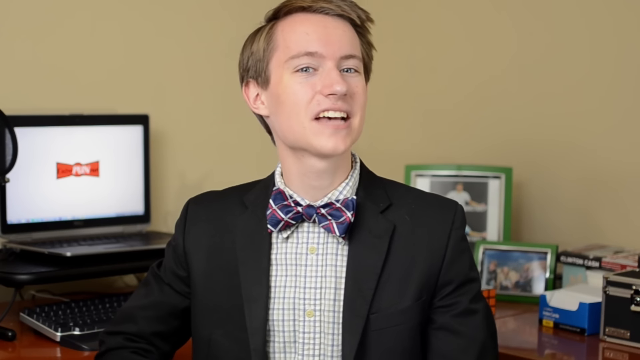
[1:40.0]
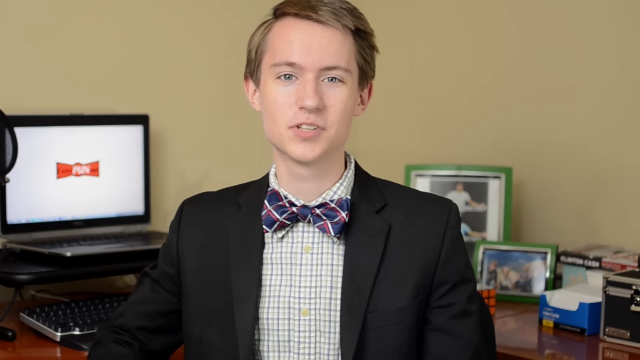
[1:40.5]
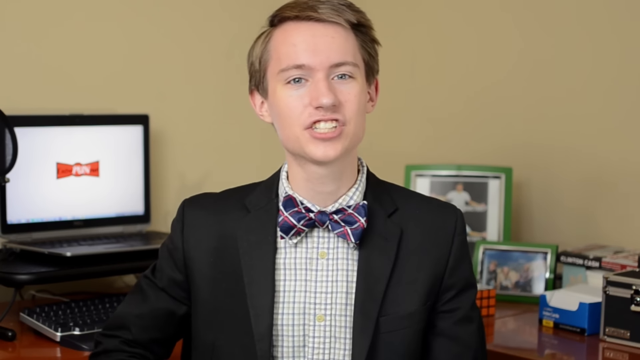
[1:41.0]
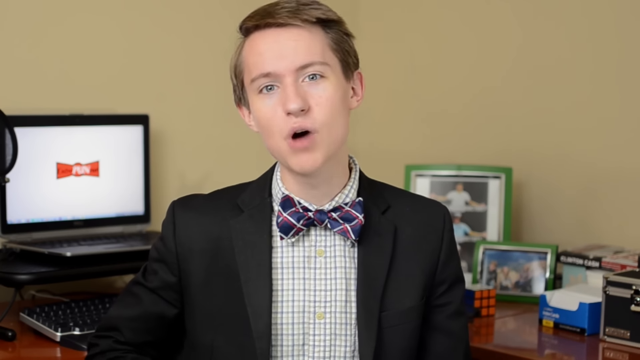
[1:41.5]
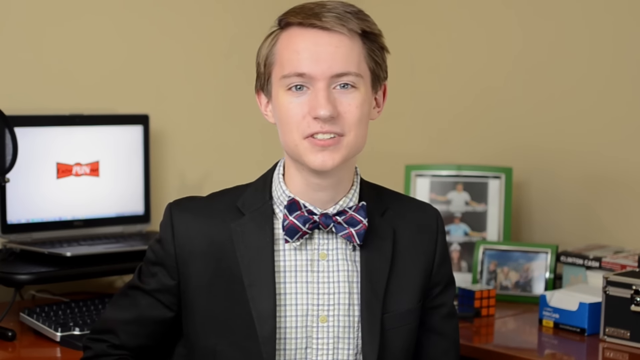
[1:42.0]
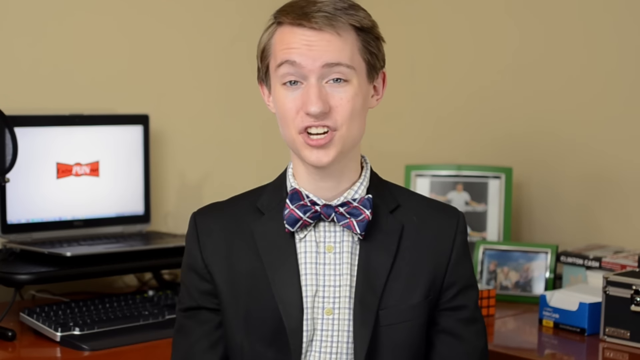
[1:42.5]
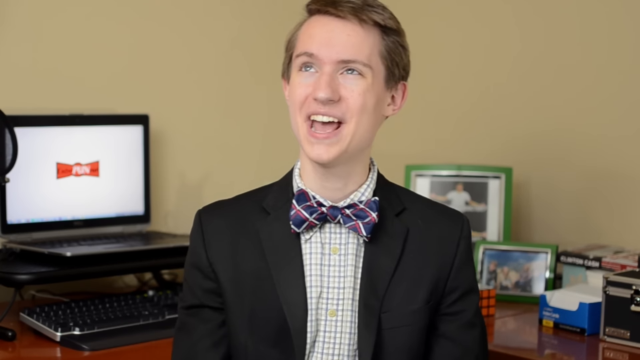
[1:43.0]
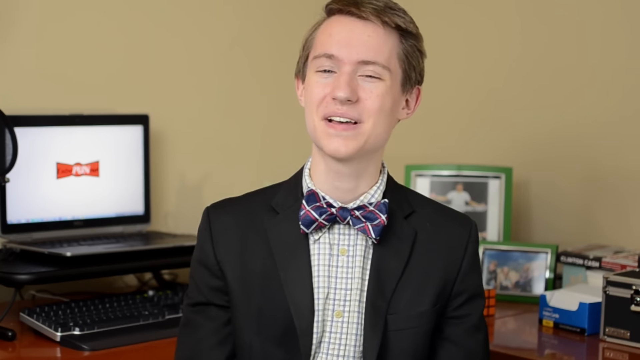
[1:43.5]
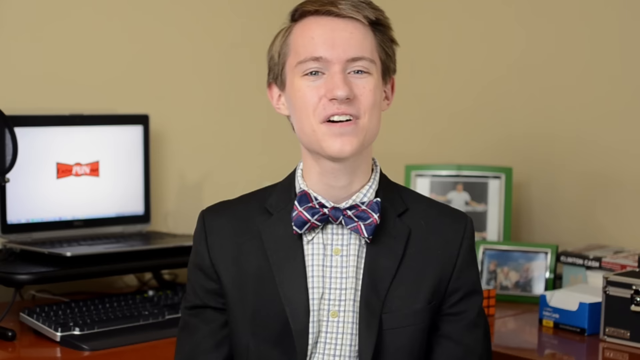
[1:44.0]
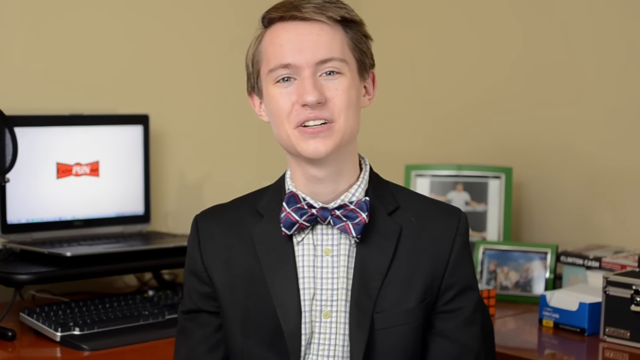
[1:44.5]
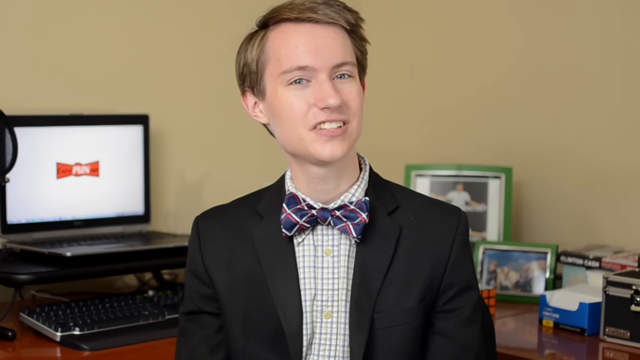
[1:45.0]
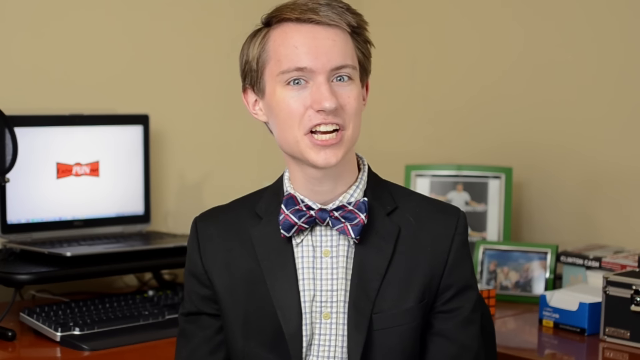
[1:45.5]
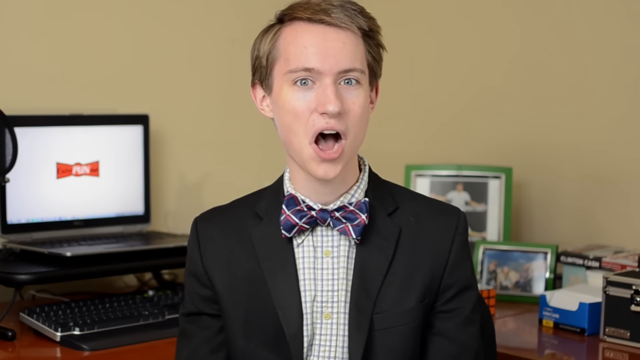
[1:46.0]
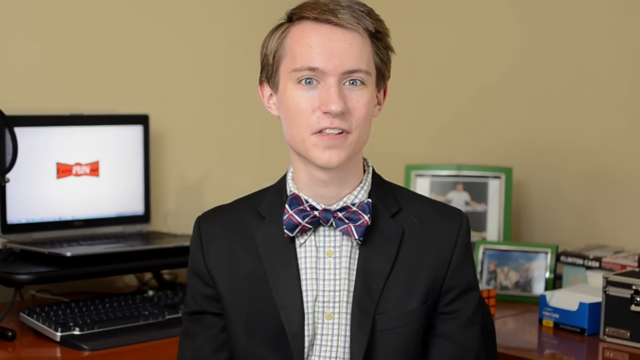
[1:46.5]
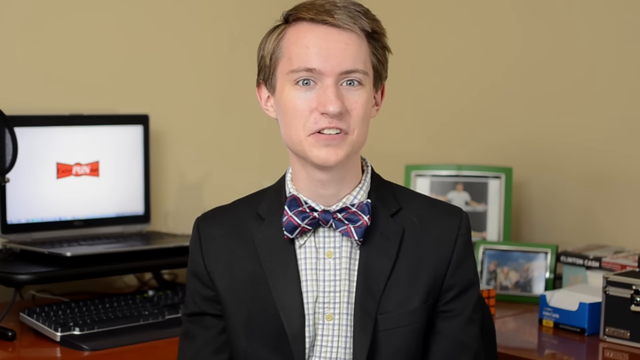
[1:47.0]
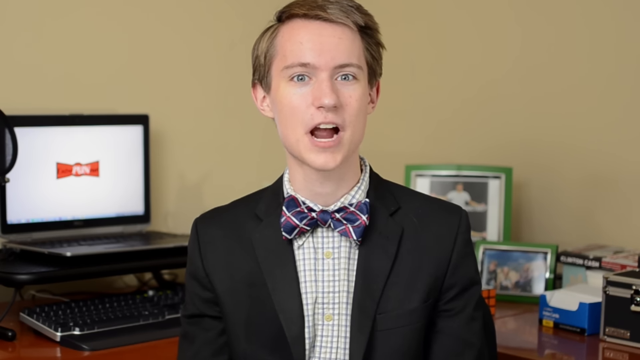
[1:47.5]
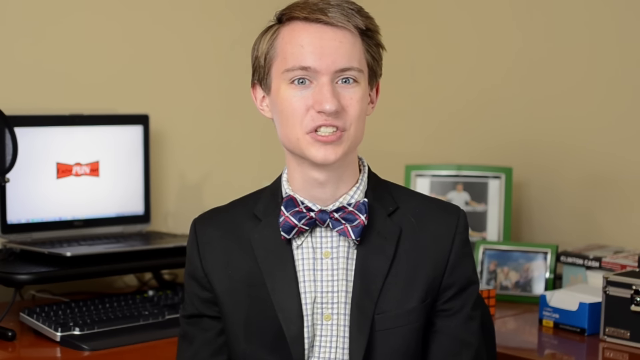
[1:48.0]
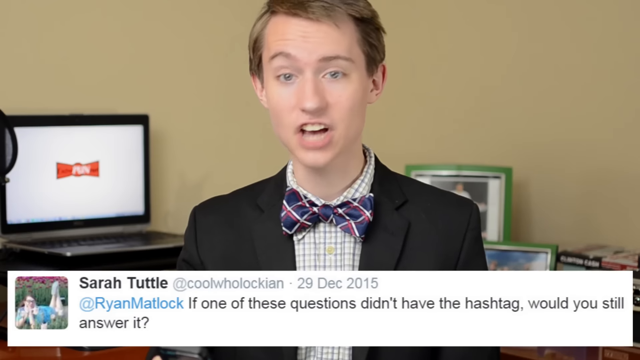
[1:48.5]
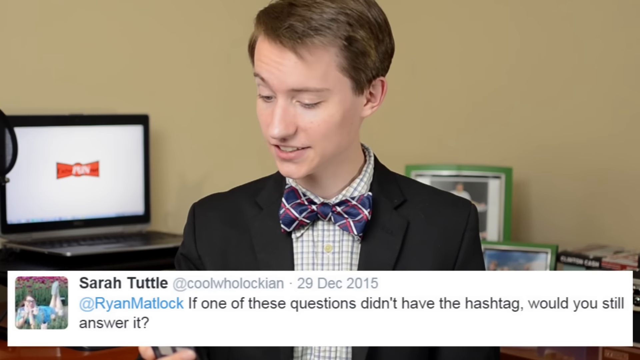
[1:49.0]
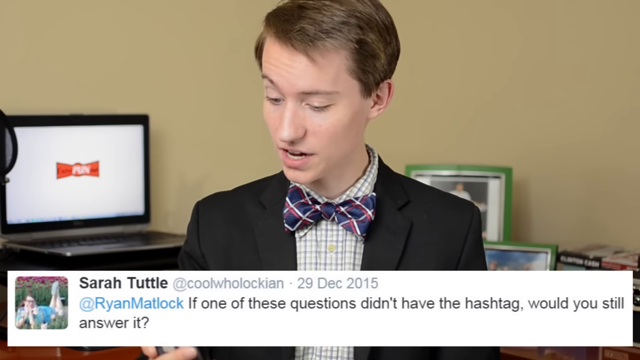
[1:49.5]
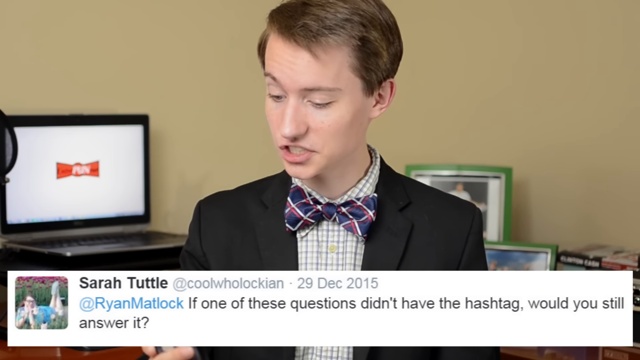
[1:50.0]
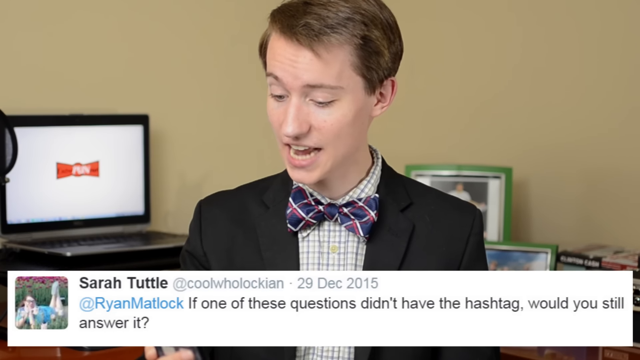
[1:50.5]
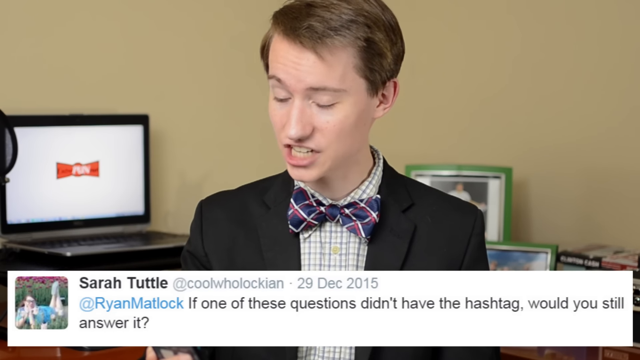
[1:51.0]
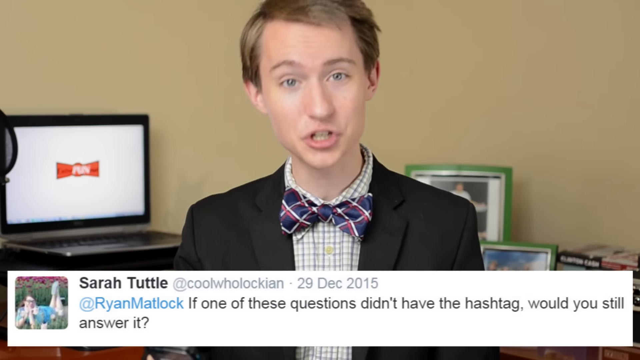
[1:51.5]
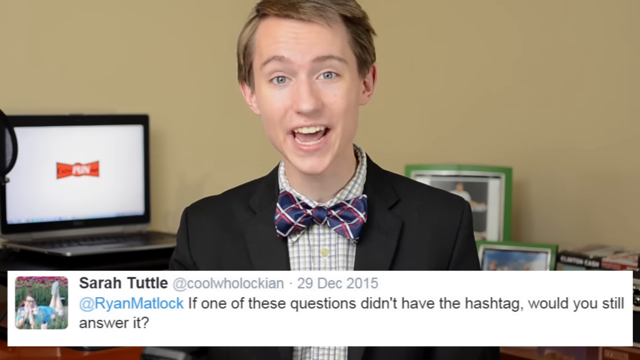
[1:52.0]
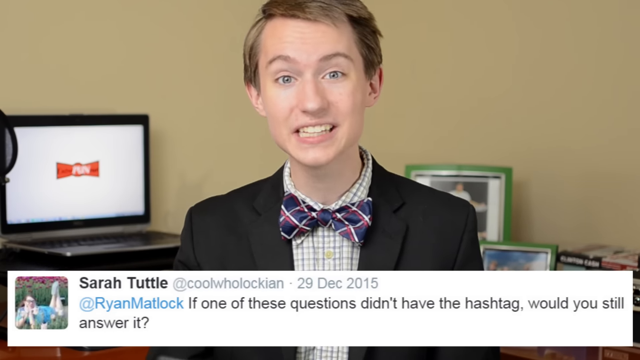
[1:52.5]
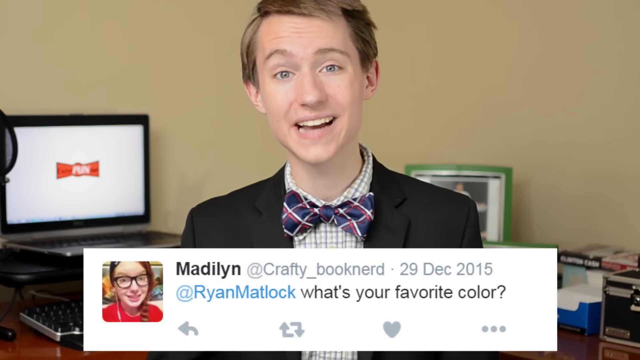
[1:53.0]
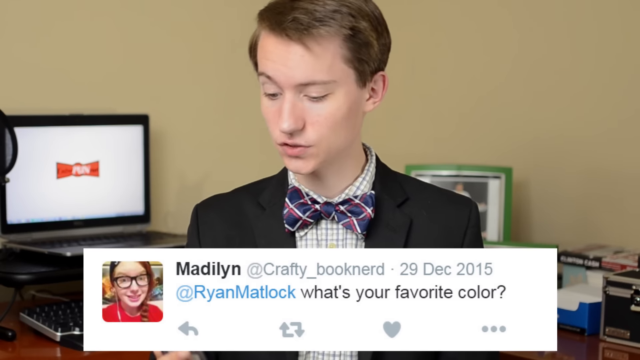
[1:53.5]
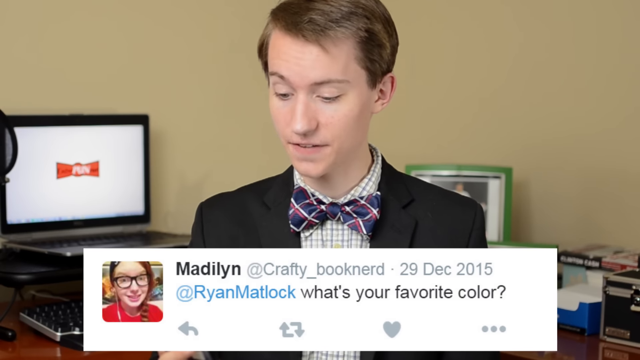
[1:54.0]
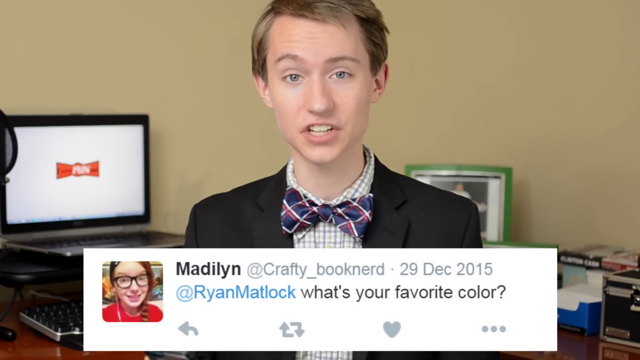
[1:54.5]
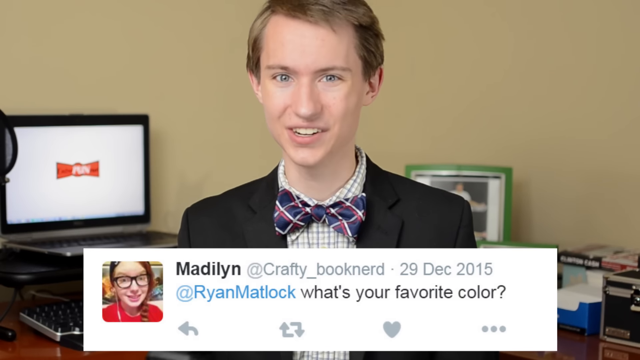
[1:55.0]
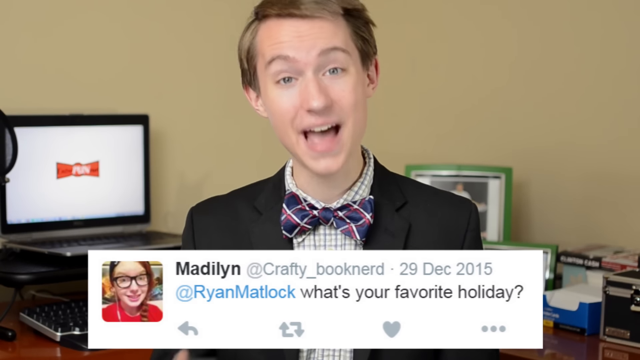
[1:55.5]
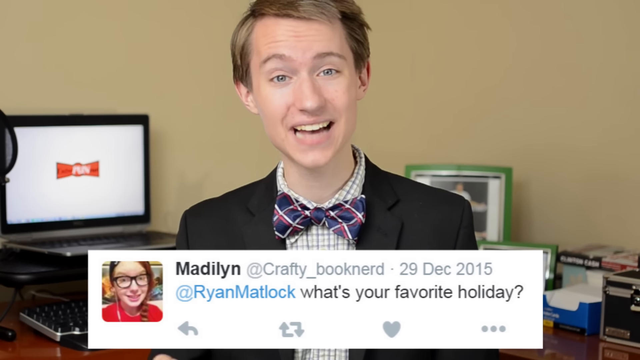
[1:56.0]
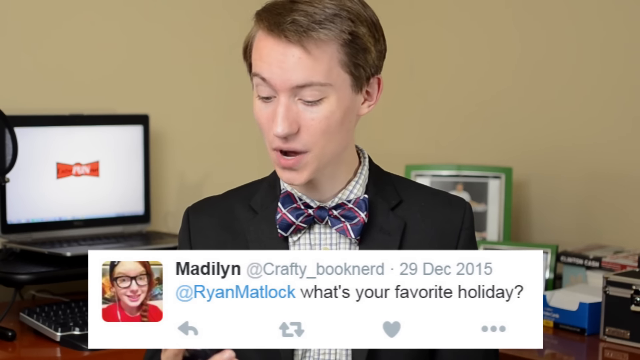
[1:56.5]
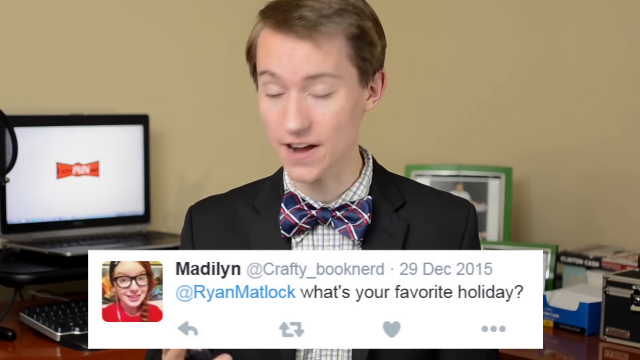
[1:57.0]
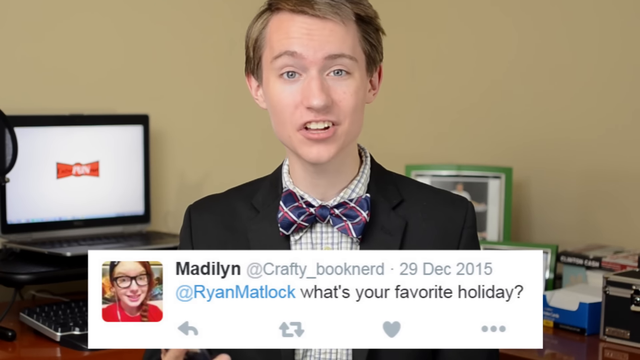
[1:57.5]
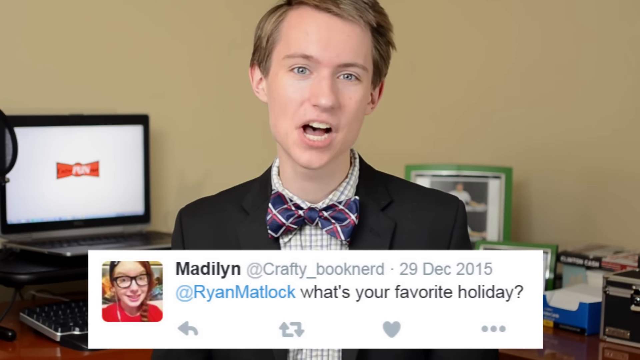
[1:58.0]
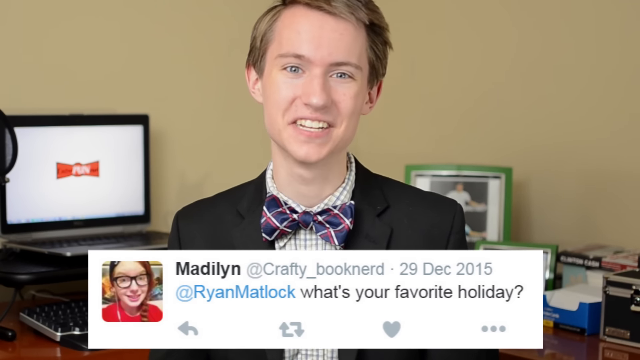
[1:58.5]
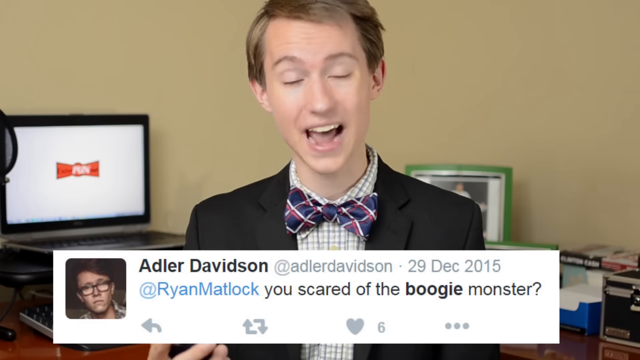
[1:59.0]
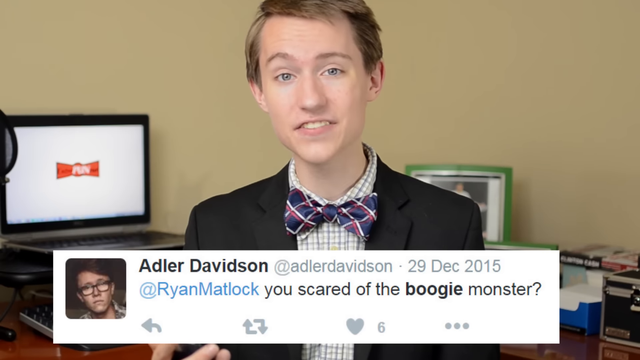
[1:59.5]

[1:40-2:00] The young man, with a white skin tone and short brown hair combed to the right, is in the same location. He wears a black suit jacket, a white buttoned-up shirt with vertical gray stripes, and a dark blue bow tie with red and white stripes. Behind him are a beige wall, a laptop on the left, and some portraits sitting on a cabinet to the right, along with some books. He talks directly to the camera, looking up to the top left with a slight smile as he slightly opens his eyes. The scene changes and he looks to the bottom left, holding his phone in his right hand, as a white rectangle appears at the bottom with a tweet from Sarah Tuttle: "If one of these questions didn't have the hashtag, would you still answer it?", with a small square icon to the left of the question. He looks up at the camera, and in a quick scene change the tweet disappears and a new one appears from Madilyn: "what's your favorite color?", posted on 29 December 2015. He looks to the bottom left at his phone, and the scene quickly switches to another tweet from Madilyn: "what's your favorite holiday?" He looks to the bottom left and then directly at the camera to answer it.